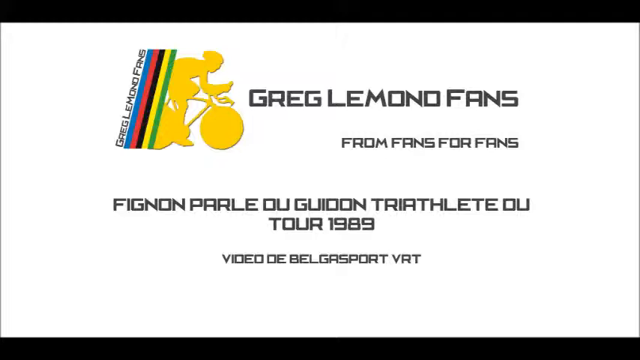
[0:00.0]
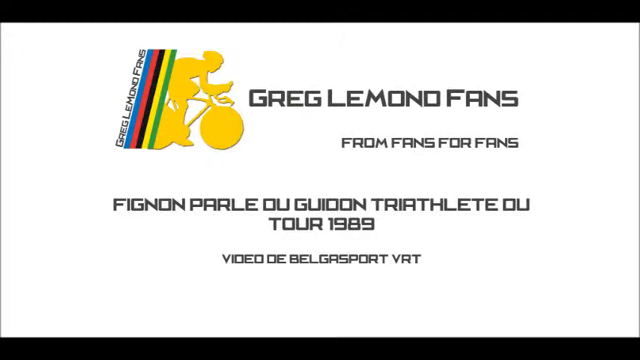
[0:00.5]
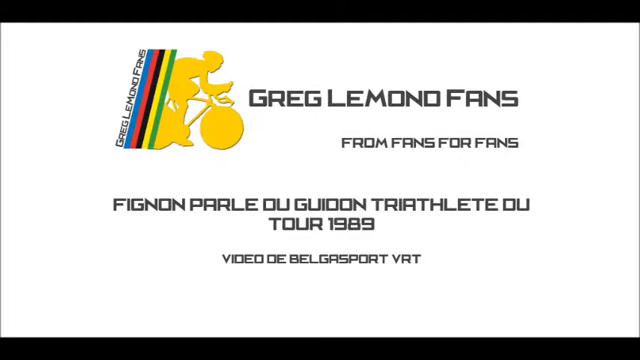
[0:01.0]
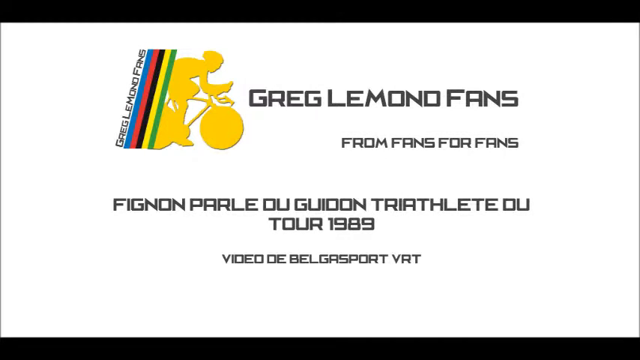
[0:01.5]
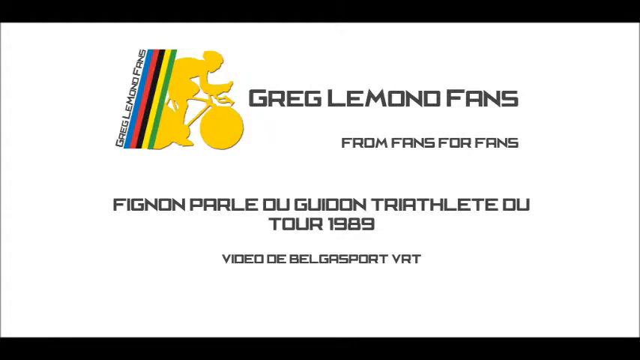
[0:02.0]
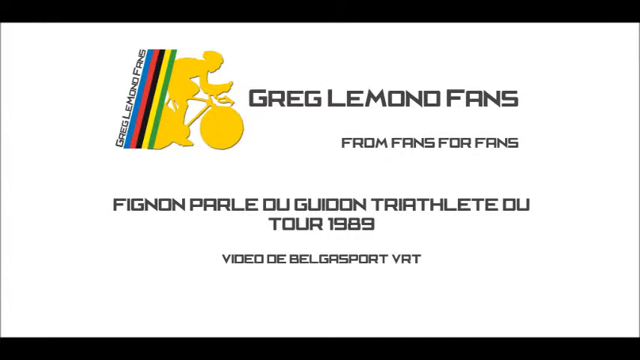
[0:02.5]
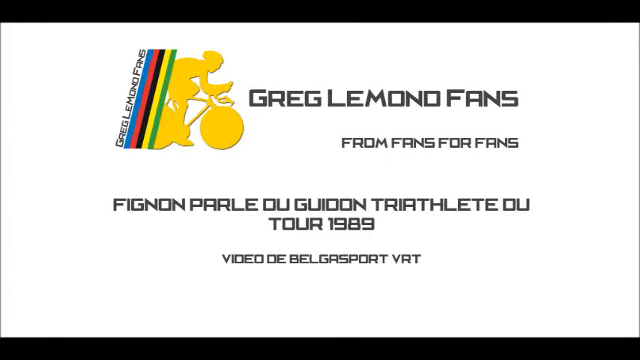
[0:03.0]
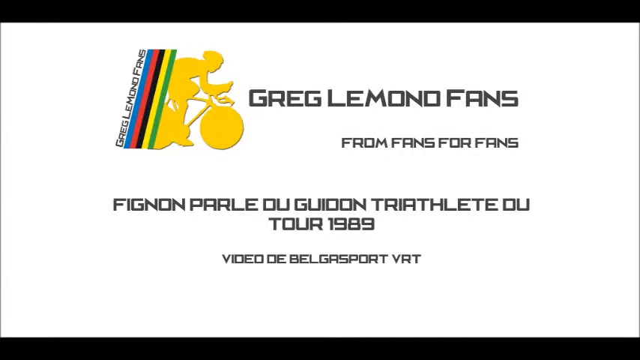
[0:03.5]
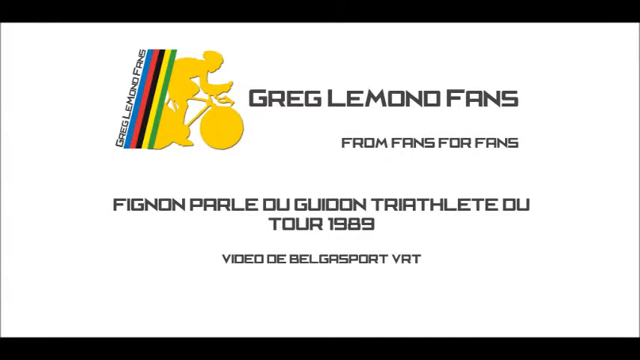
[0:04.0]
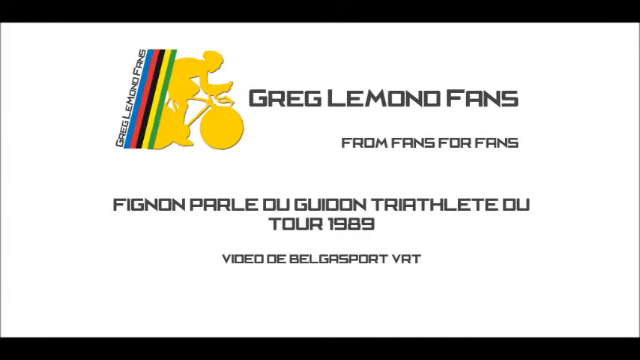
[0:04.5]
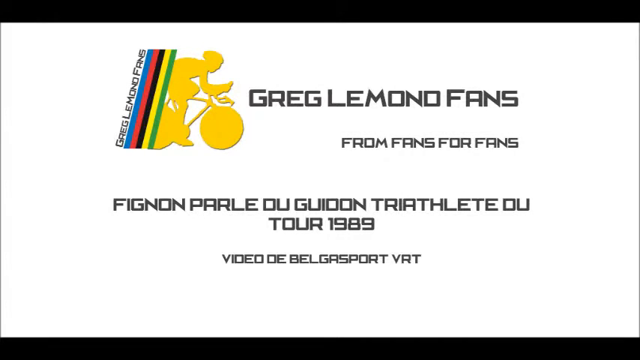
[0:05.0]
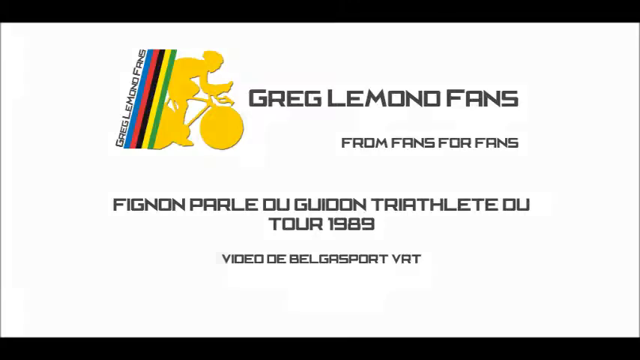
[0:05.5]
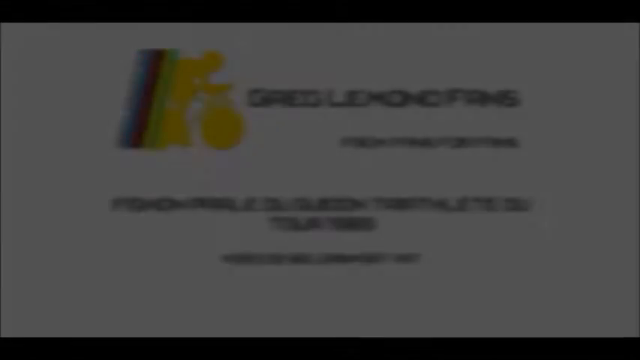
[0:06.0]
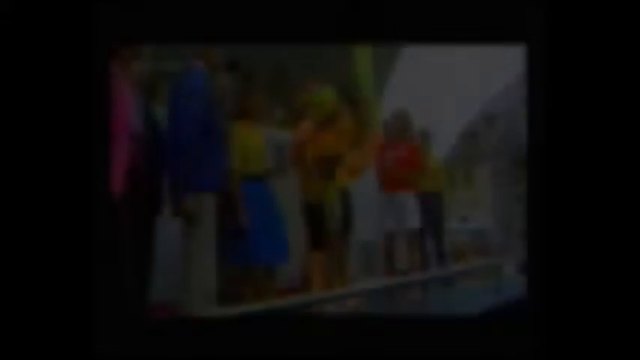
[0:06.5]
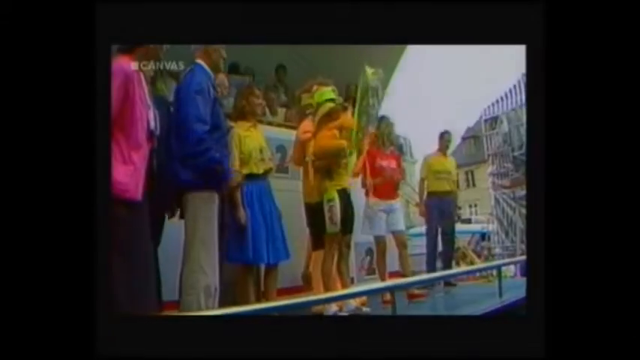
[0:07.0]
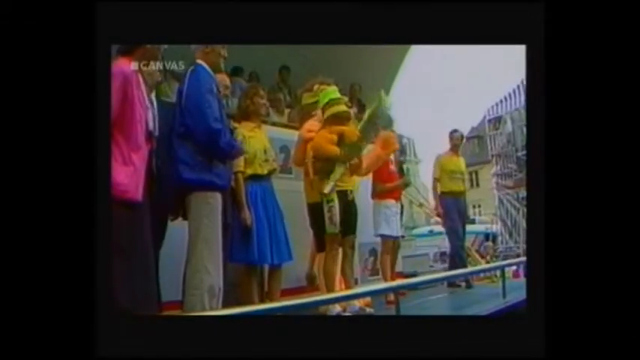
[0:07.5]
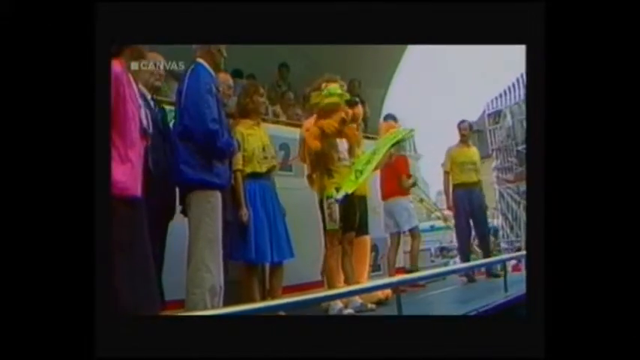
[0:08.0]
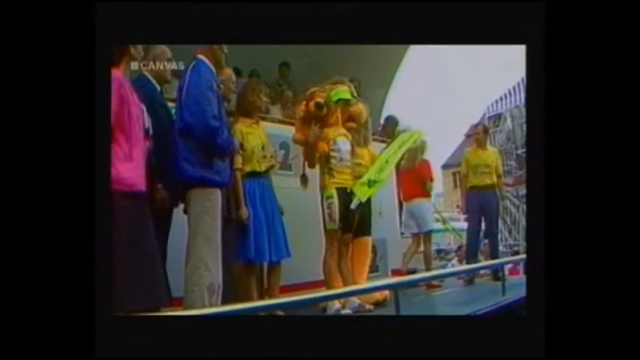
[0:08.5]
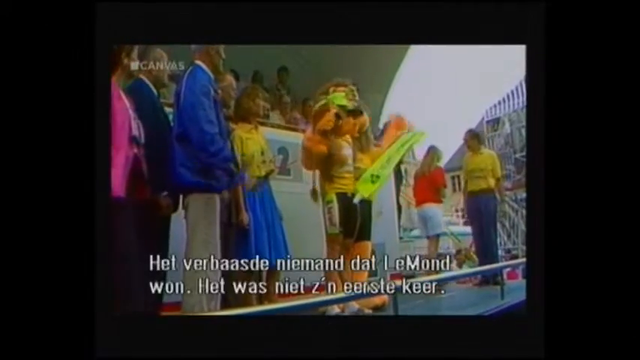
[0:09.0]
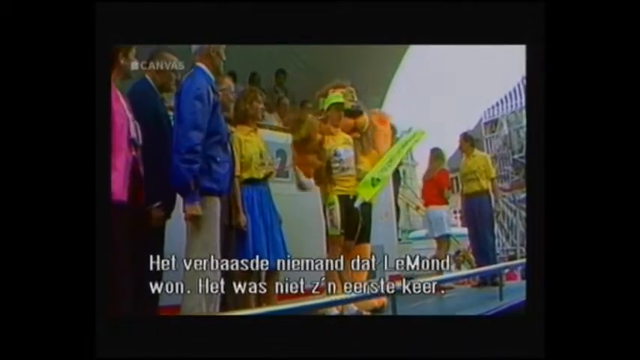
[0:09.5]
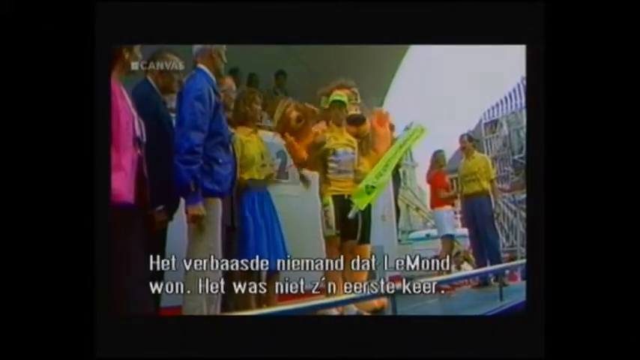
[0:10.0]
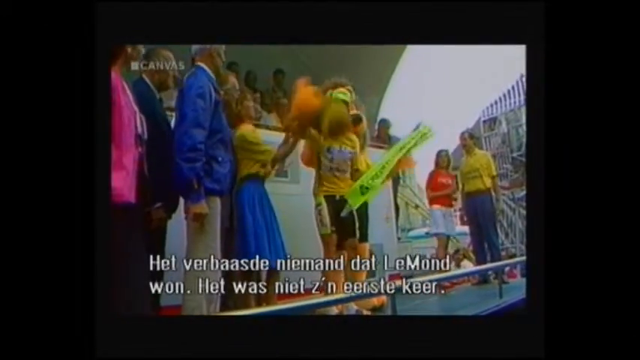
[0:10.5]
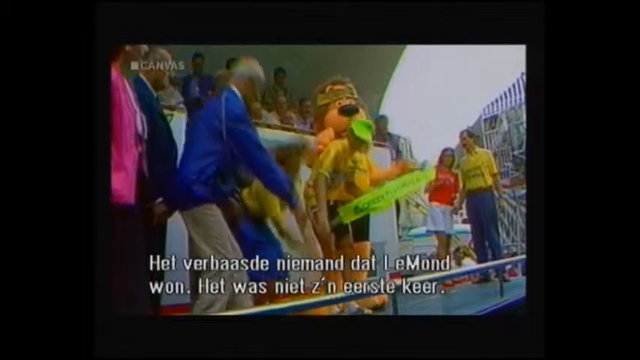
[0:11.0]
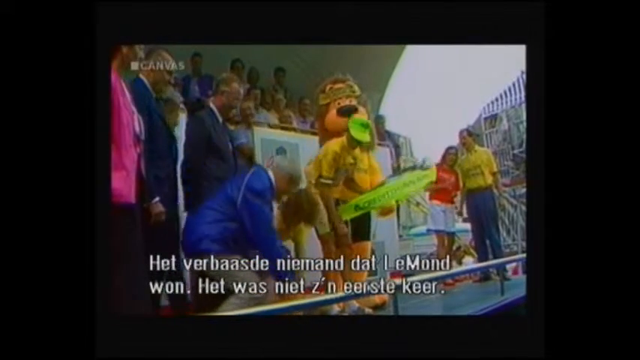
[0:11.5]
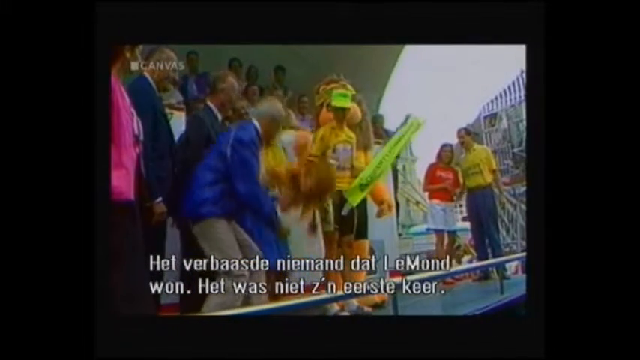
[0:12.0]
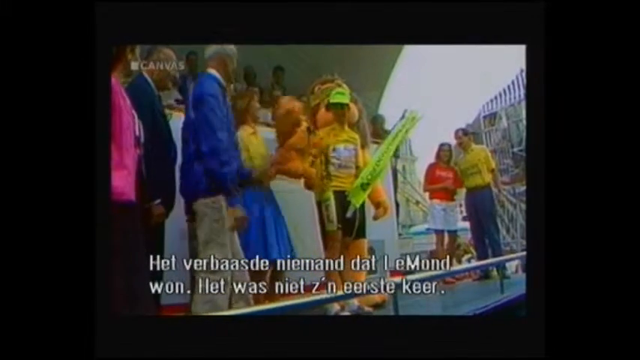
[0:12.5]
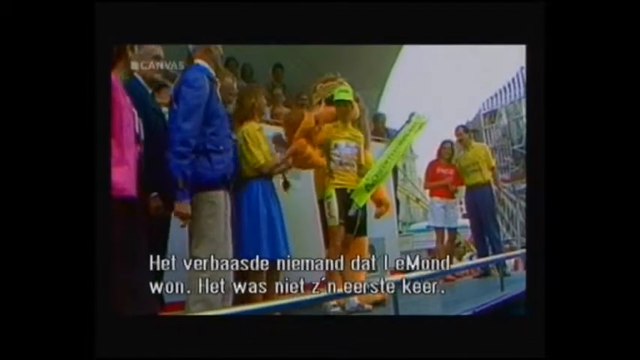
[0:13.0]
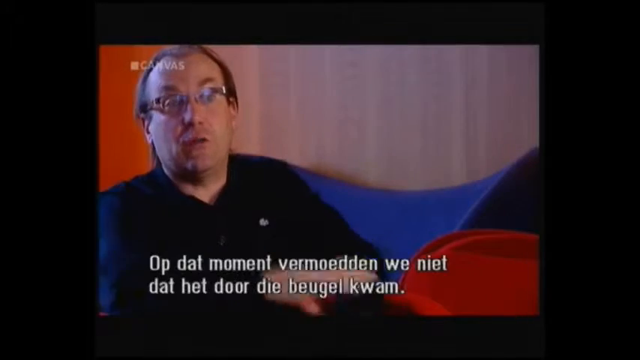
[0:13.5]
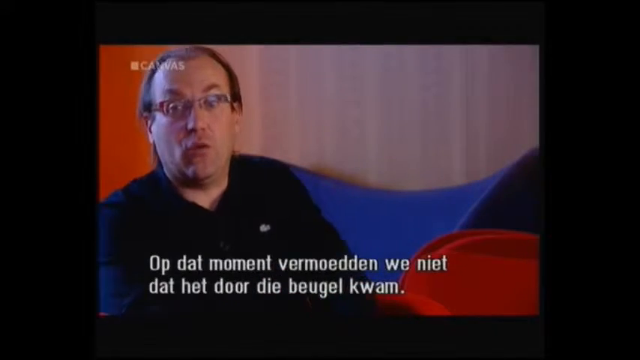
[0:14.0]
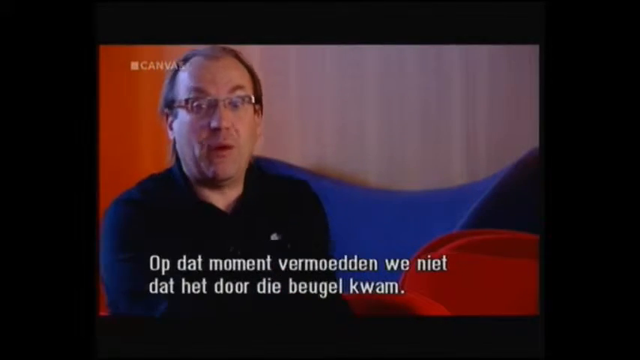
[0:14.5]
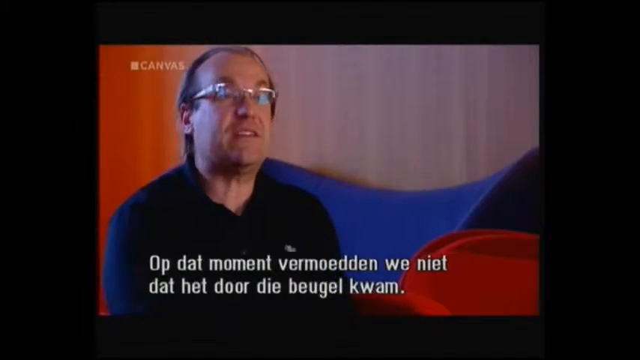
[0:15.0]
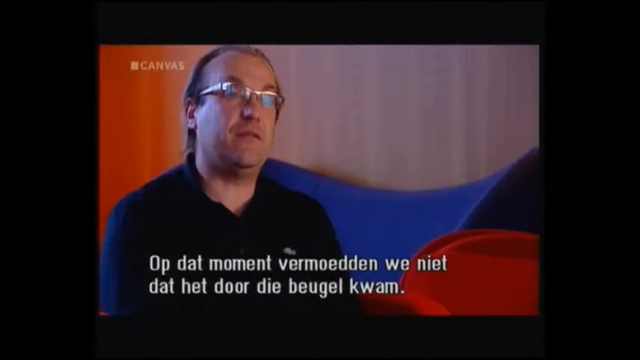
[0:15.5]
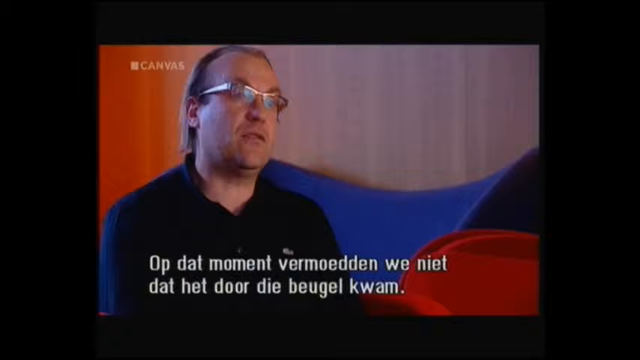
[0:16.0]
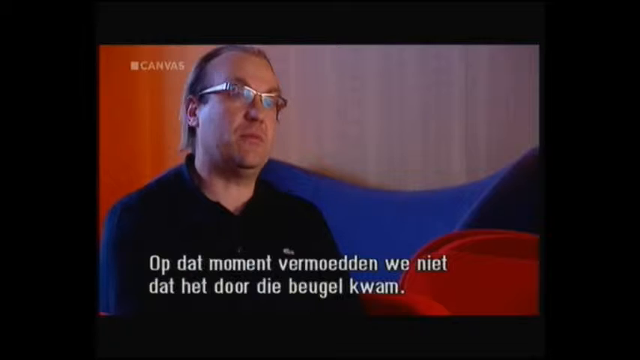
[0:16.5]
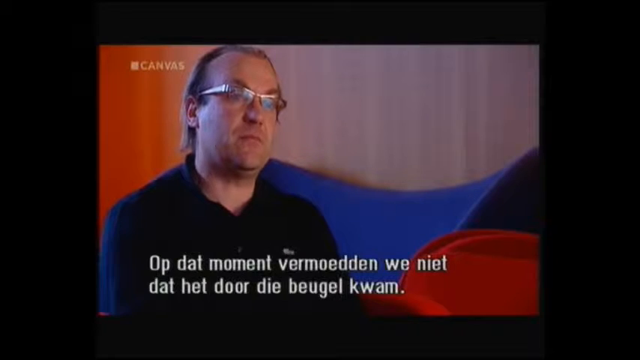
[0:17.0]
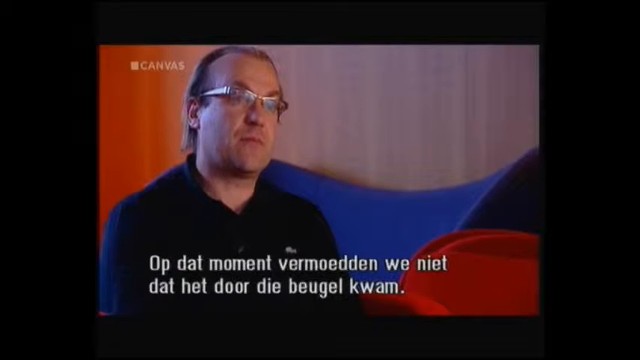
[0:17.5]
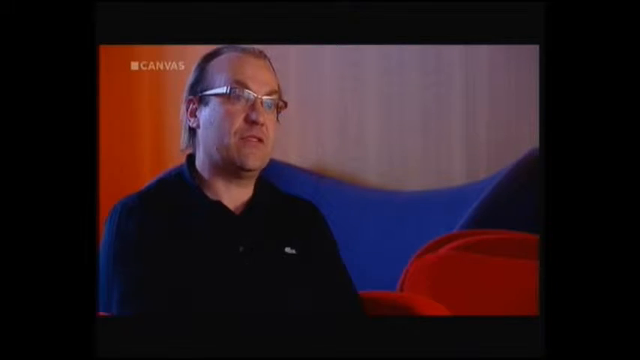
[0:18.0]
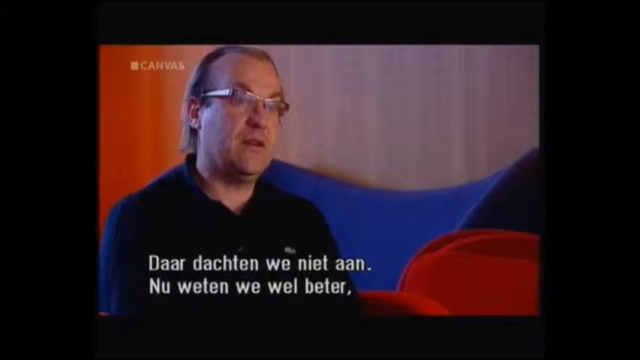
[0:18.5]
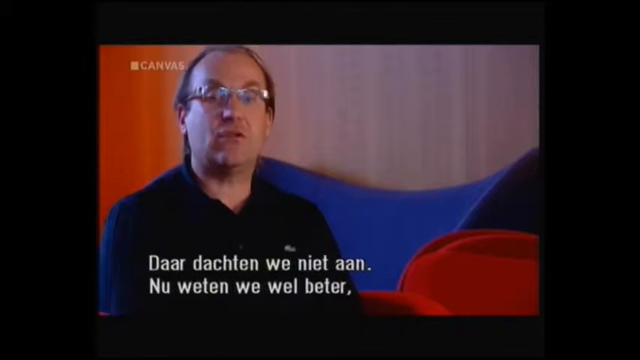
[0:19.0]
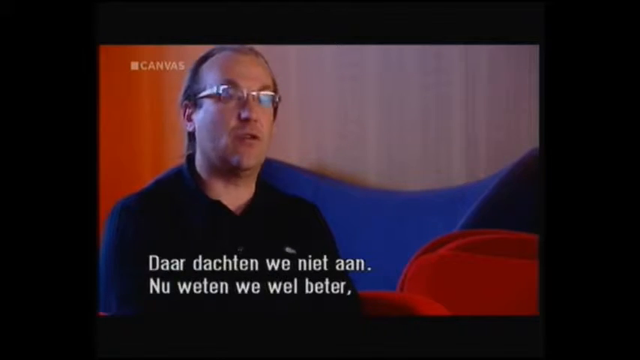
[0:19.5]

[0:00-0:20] The video opens with text on the screen that includes "Greg Lemond Fans from Fans4Fans," "Fignon," "Tour 1989," "Video" and "VRT," with a symbol on the left of someone riding a bicycle. The video cuts to some people standing; it looks like older film, probably from 1989. There is a mascot that looks like a tiger or a lion, and in front of the lion a person holds a stuffed animal lion. There are people to the right and to the left of the person and the lion, some older-looking people to their right and some younger people as well. A boy wearing a yellow neon green hat and a yellow shirt stands in front of the lion, and a younger woman picks up the stuffed lion that the boy dropped. Subtitles at the bottom of the screen are not in English and might be German. The next shot shows a man who looks to be in his 40s speaking in an interview format. He has some balding at the front of his head but long hair, looks like a Caucasian male, and wears glasses and a black collared shirt. He speaks while moving his head, kind of nodding it left and right, and looks to his right a few times.